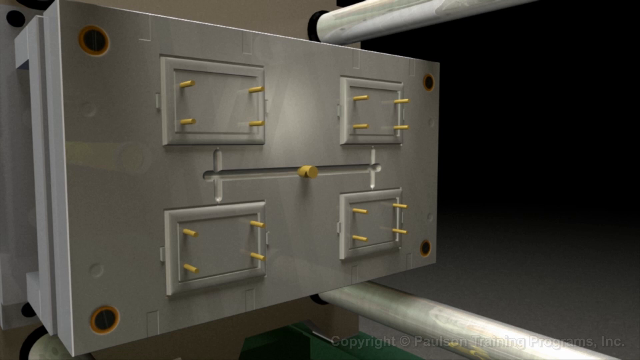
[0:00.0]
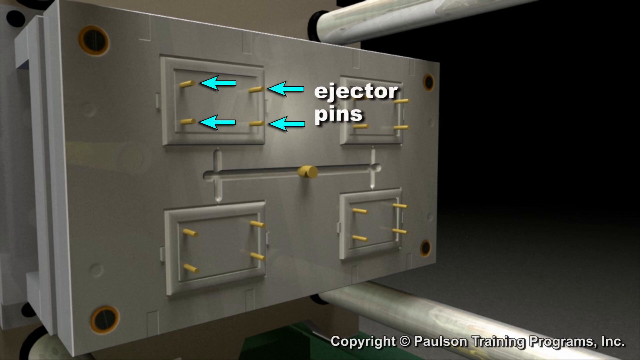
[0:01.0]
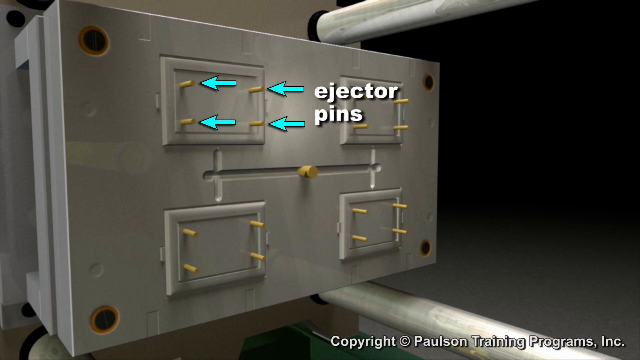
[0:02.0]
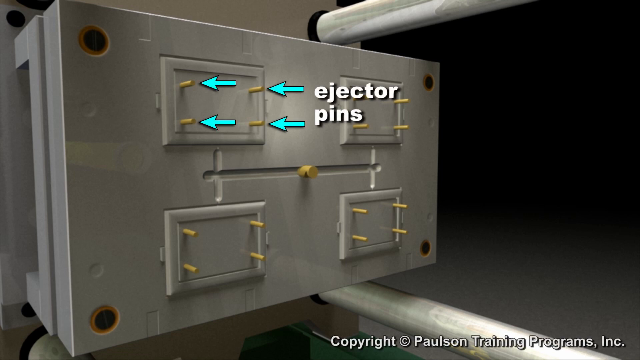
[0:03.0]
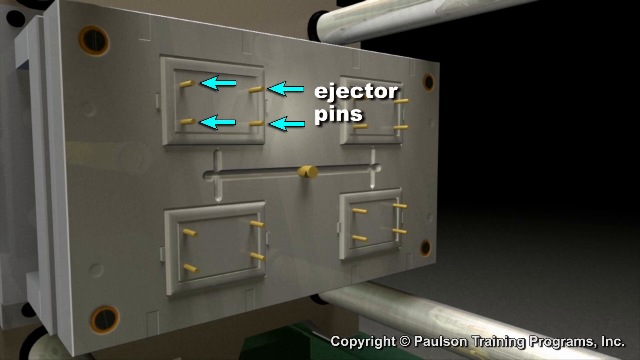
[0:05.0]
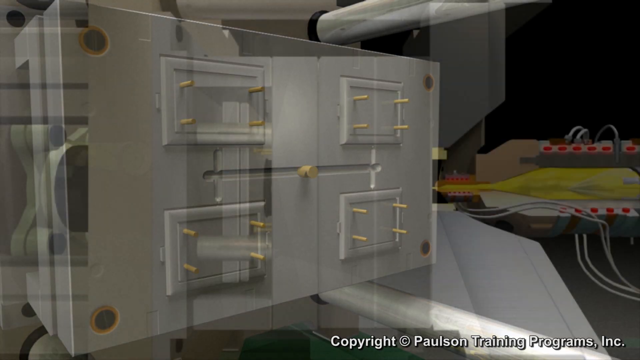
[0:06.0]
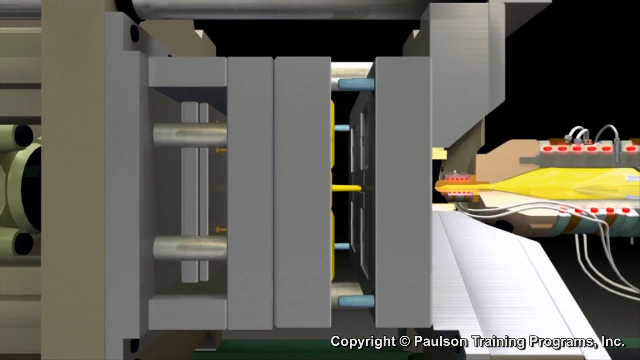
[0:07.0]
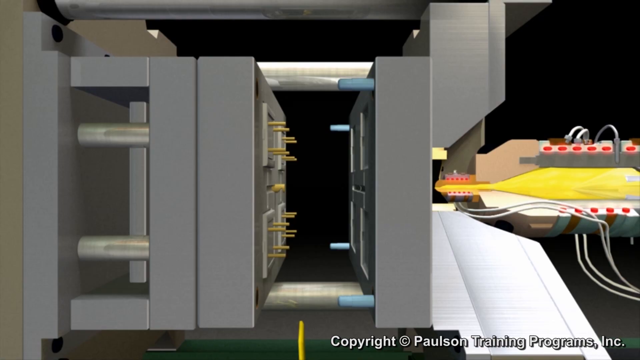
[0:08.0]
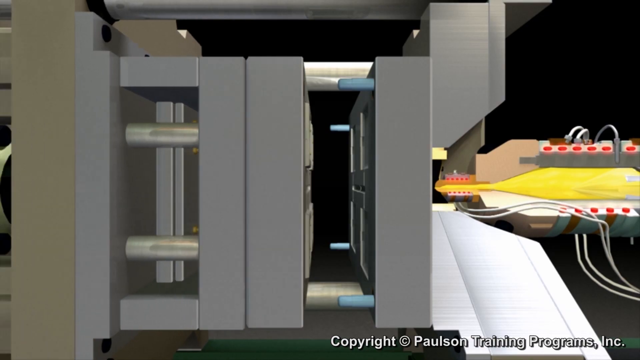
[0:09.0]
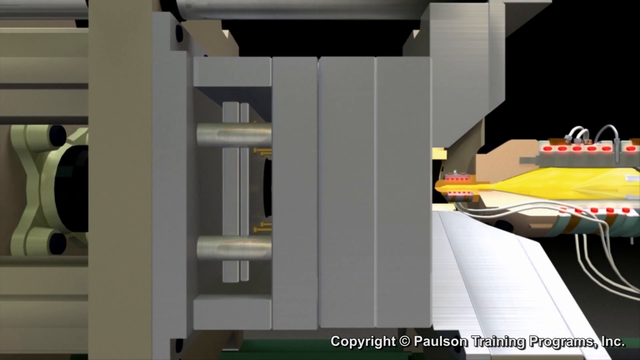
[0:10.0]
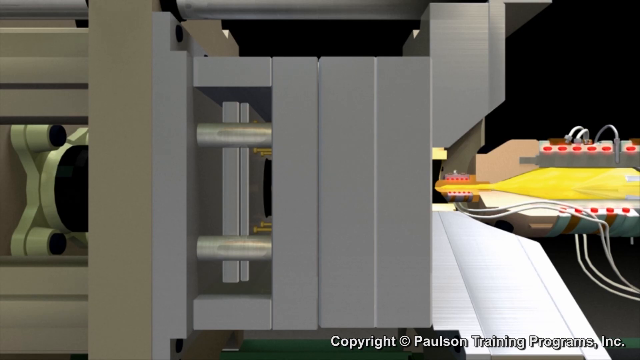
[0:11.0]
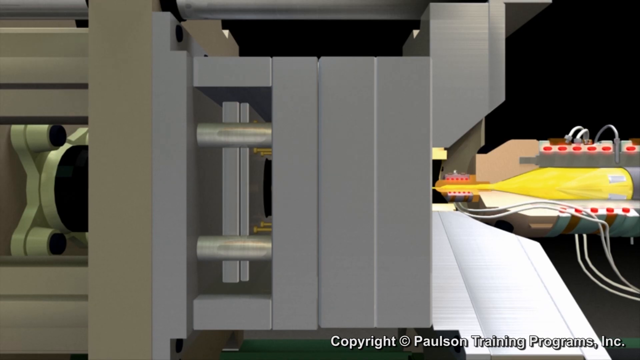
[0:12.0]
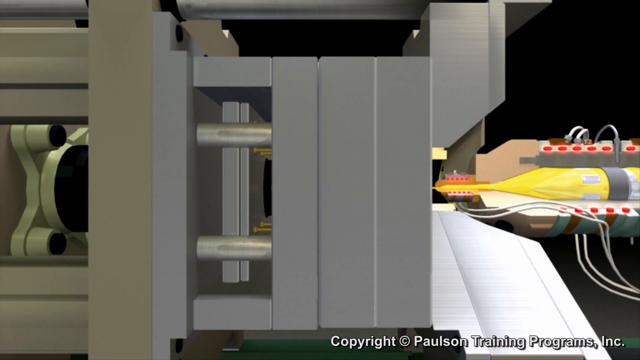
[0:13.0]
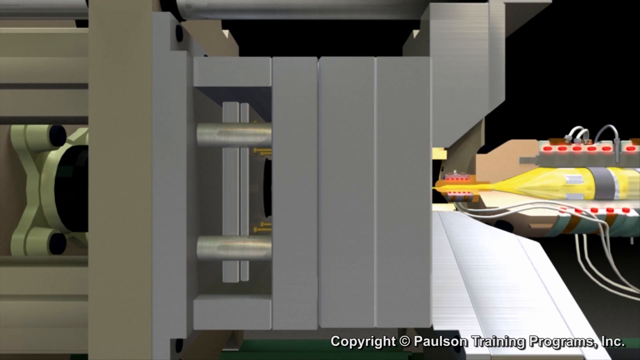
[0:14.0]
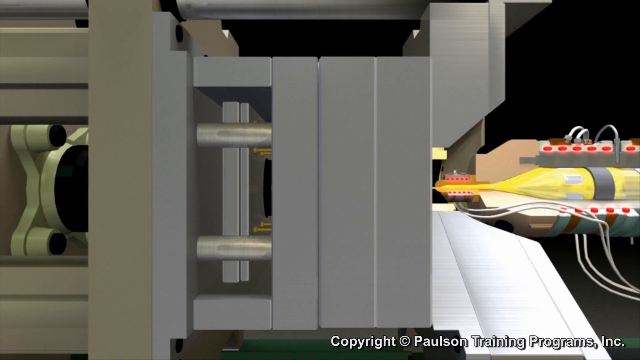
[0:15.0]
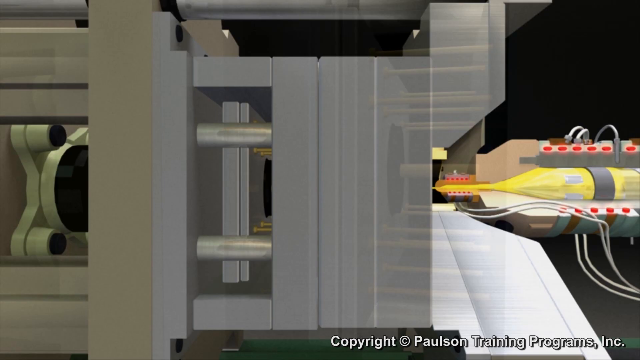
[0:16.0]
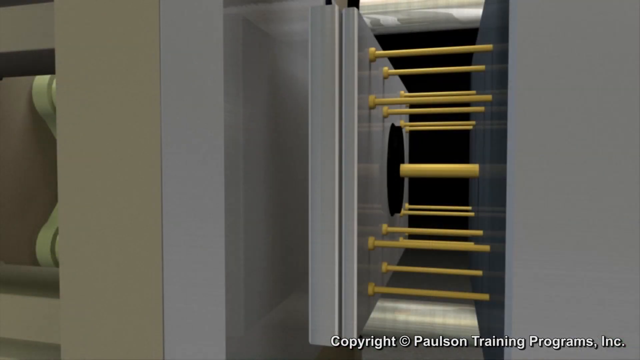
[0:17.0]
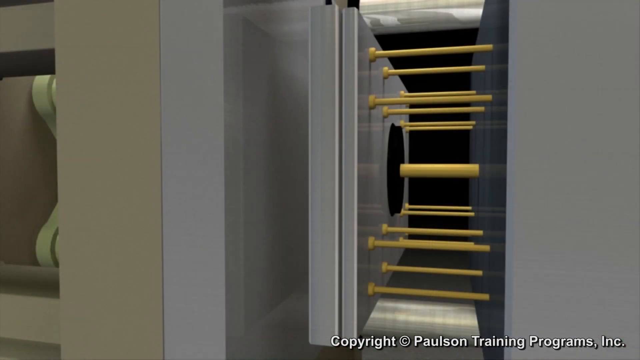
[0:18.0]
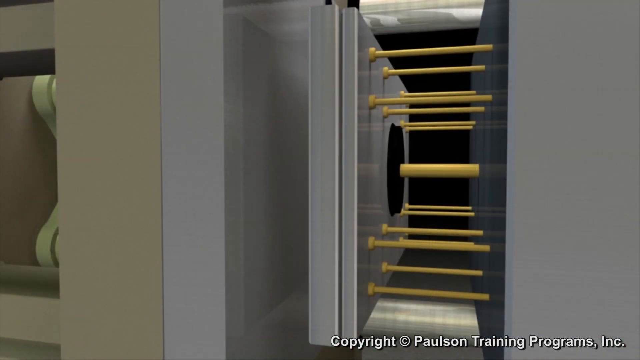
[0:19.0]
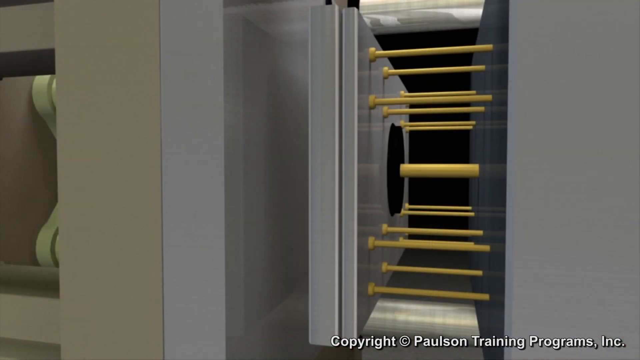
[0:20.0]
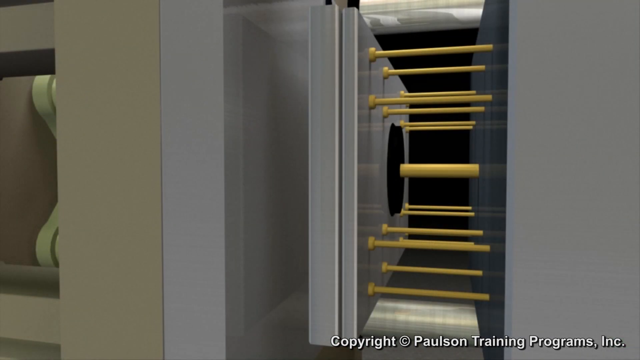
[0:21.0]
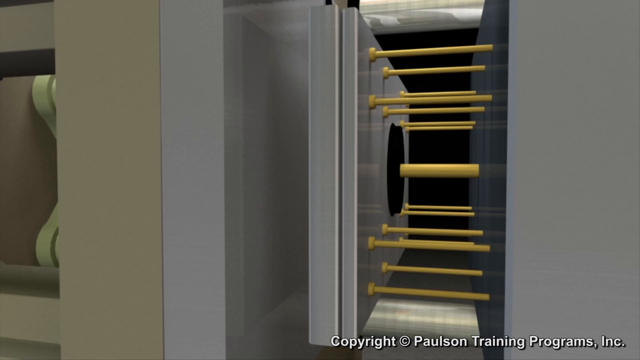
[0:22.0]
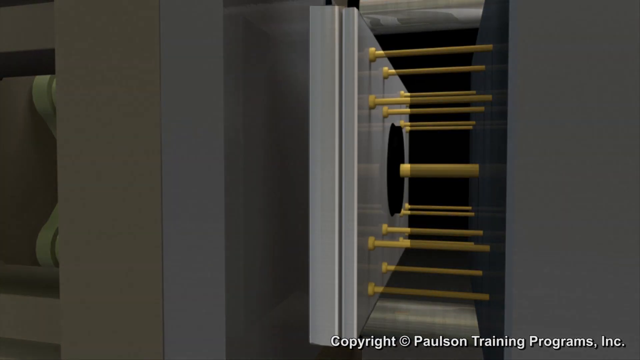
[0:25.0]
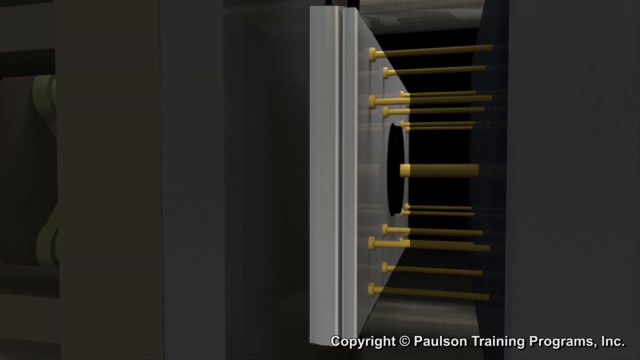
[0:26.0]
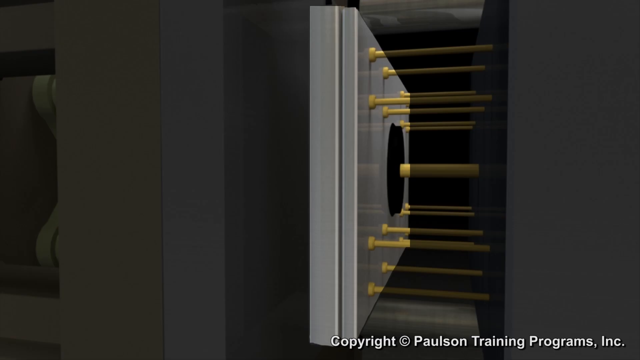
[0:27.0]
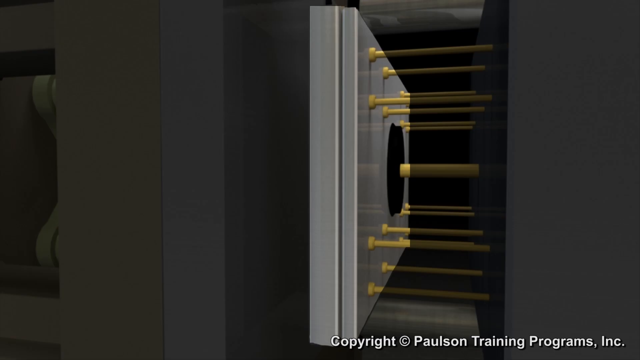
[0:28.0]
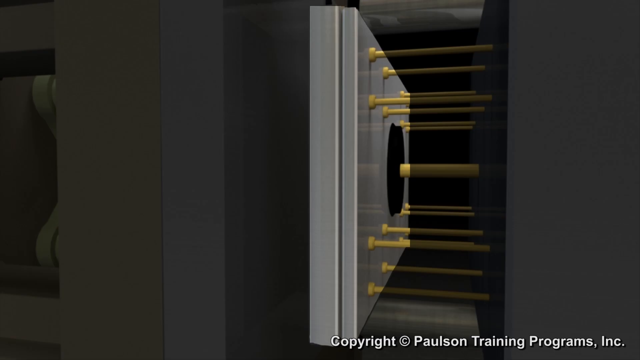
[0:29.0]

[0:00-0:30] A CGI, computer-generated recreation of what appears to be some type of industrial machine is set against a plain black background. The machine includes a fairly thick rectangular slab, apparently of metal alloy, mounted with its longest sides parallel to the ground. The slab is oriented semi-facing the camera at an angle, so the side nearest the camera appears larger and the far side a little smaller. It has four black holes in its corners that appear to be from the bolts used to affix it to the other parts of the machine or apparatus. On the large face of the slab are four smaller rectangles, placed evenly with their longest sides parallel to the slab's longest sides; they have raised, frame-like sides that mimic a picture frame, slightly raised from the flush surface of the slab. Protruding from the area by each corner of every small rectangle is what appears to be a bronze or gold metal pin, four per rectangle. In the middle of the slab there is a line or ridge with a larger gold pin at its center. The slab appears to be affixed to a surface with two metal alloy tubes or poles that guide it, allowing it to move forward along them. Cyan blue arrows point to the pins, with white labels naming them ejector pins. The view changes to the side of the slab, looking at its shortest side, and an apparatus of smaller rectangles moves backwards; a molded substance that has hardened is pushed off by the ejector pins and falls straight down, apparently in some type of injection mold. The rectangular surface presses against another rectangular slab with the inverse shape, the other part of the mold, and the ejector pins appear to recede when it does. A tube that appears to be filled with some type of molten liquid at great heat injects it into the mold. Gold pins are visible, either holding the mold together or possibly the ejector pins in their unretracted state.